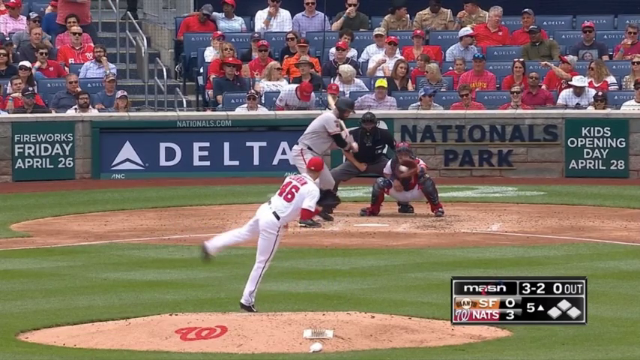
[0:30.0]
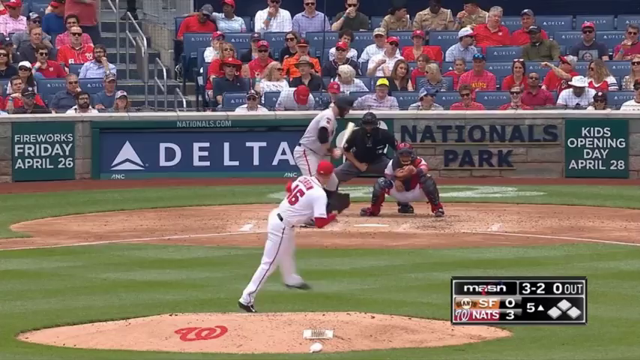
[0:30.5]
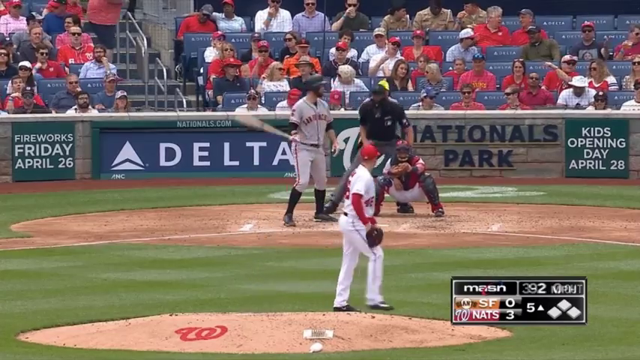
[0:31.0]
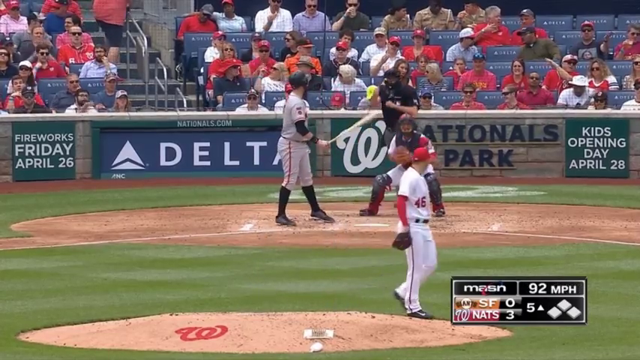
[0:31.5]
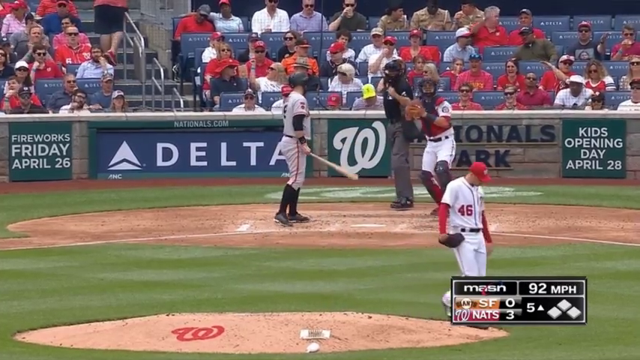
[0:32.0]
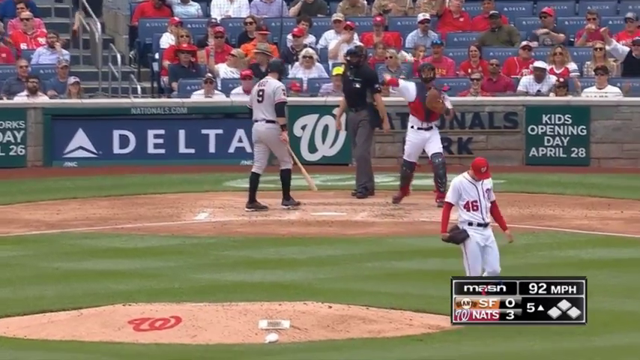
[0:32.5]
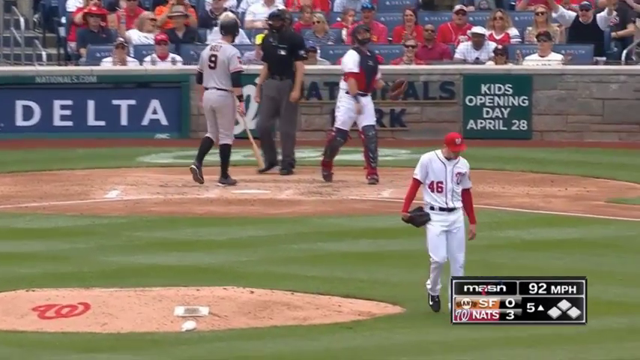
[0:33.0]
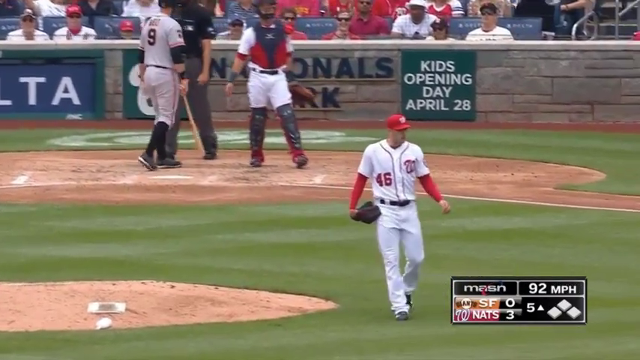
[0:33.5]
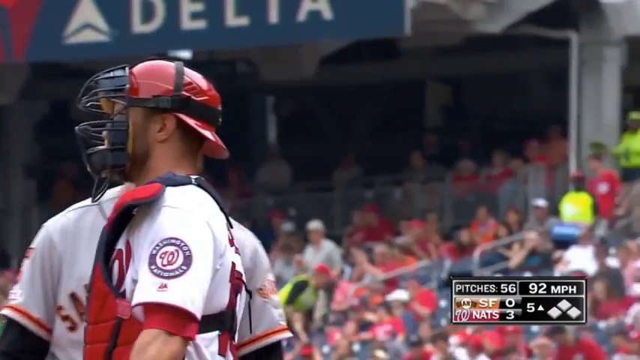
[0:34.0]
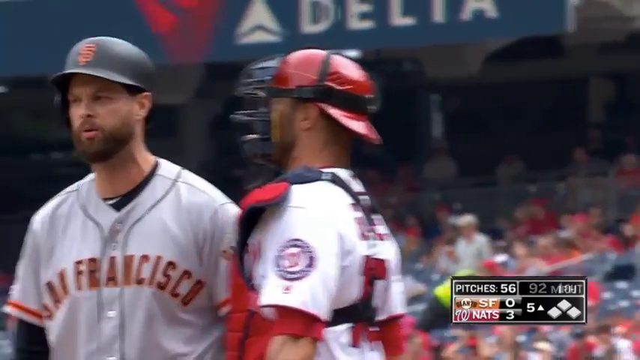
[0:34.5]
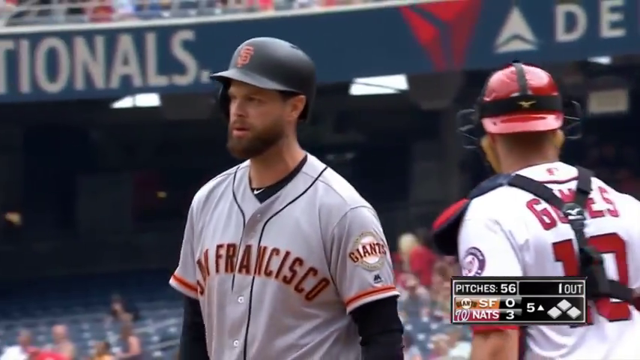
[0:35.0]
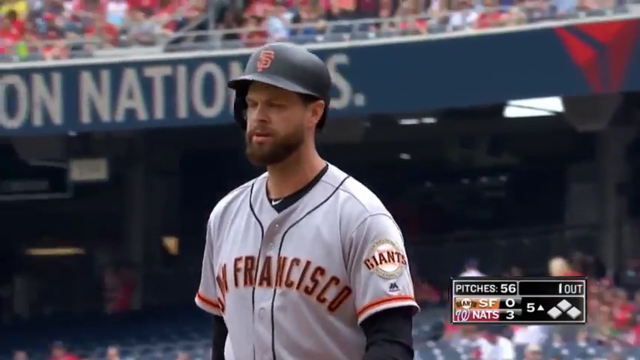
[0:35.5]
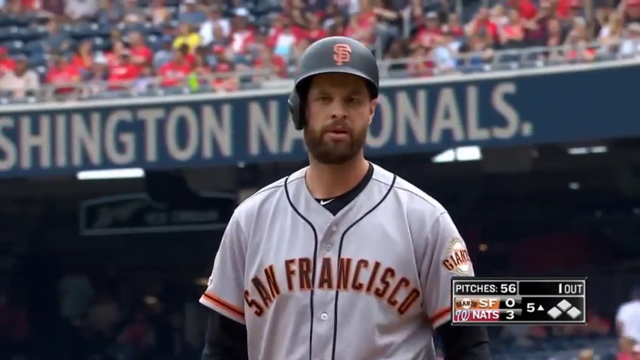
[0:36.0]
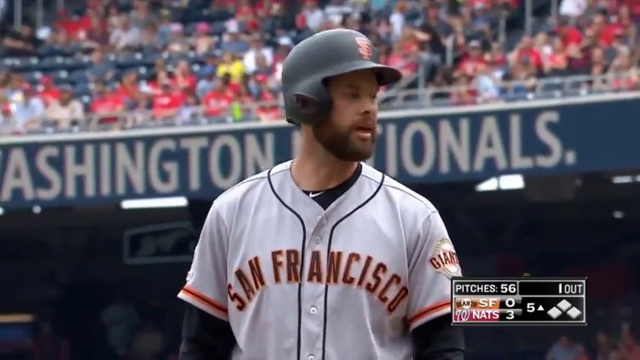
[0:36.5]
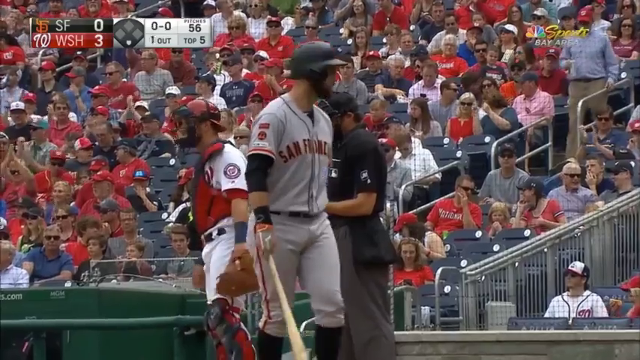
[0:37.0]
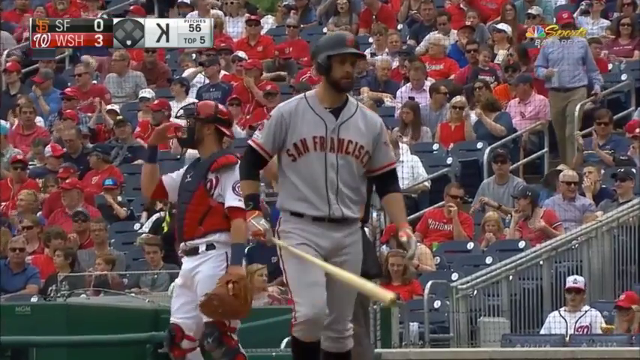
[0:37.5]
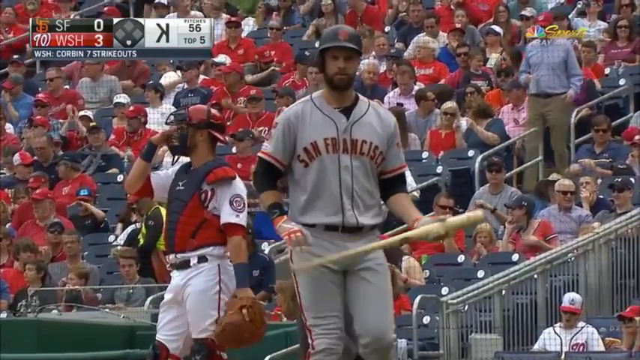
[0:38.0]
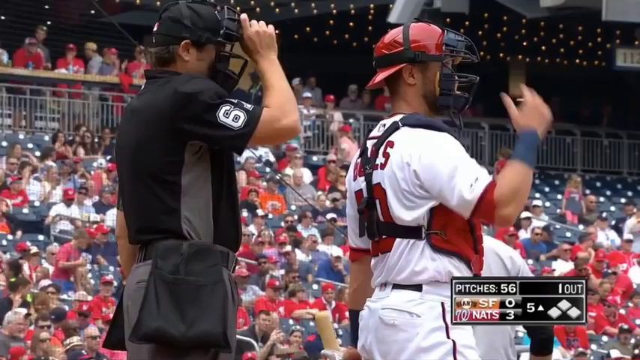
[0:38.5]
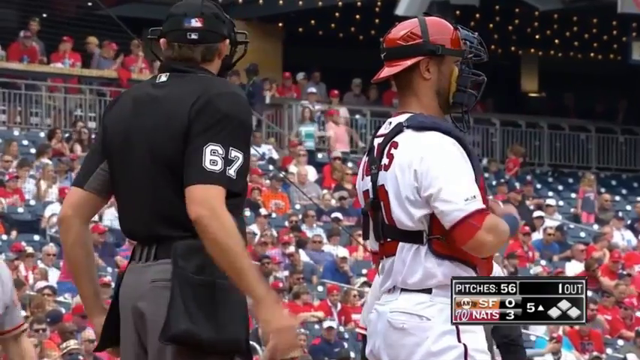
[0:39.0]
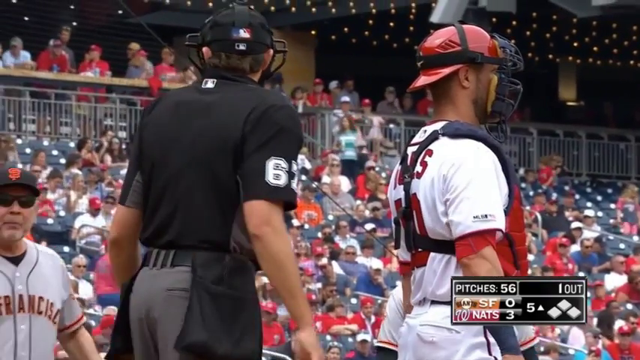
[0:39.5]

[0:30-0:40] The pitcher throws the ball to somebody else. The San Francisco player walks away looking very unhappy, chewing gum. Corbyn also walks away, apparently to get ready for another pitch. Number 62, apparently a referee, is behind the catcher and stands up. The score is still 3 for the Nats and 0 for SF, with "3 for 2" and "0 out" on screen; the scoreboard apparently shows "SF" Giants and "W Nats".